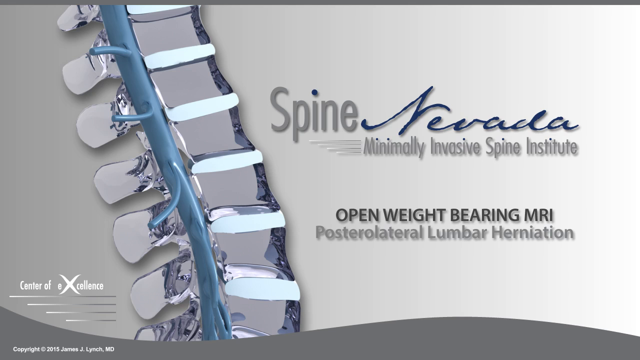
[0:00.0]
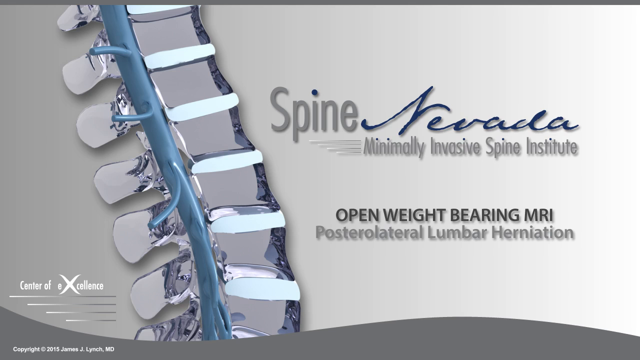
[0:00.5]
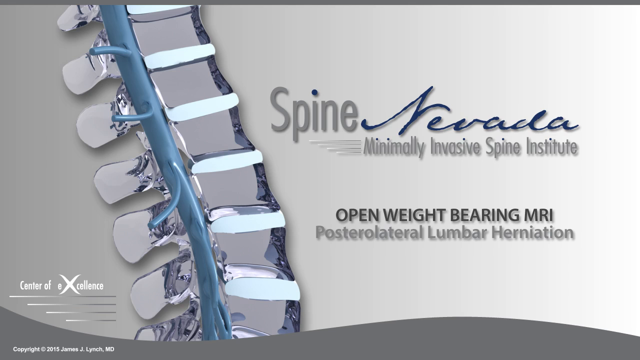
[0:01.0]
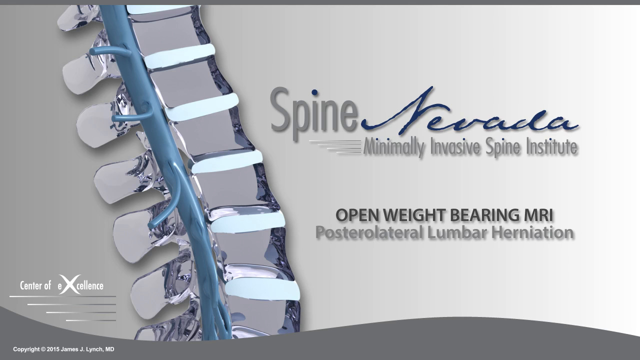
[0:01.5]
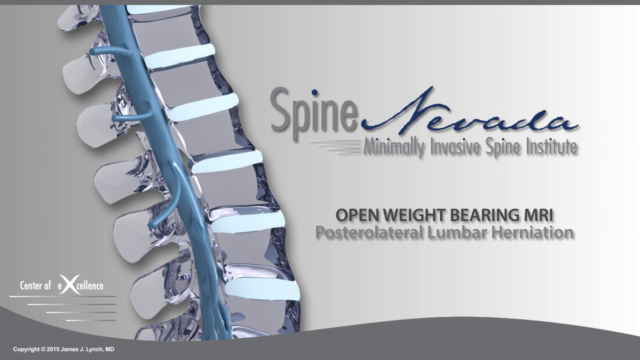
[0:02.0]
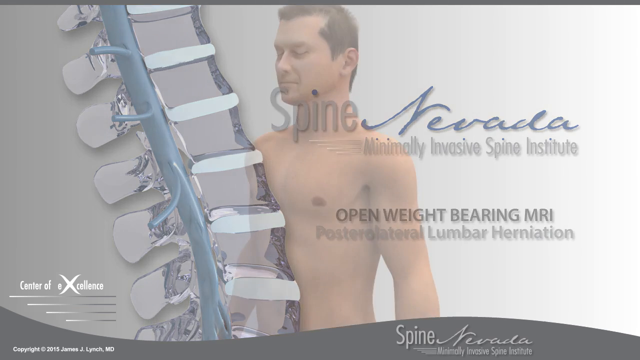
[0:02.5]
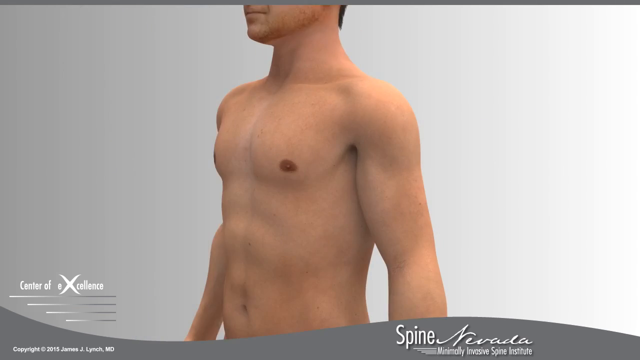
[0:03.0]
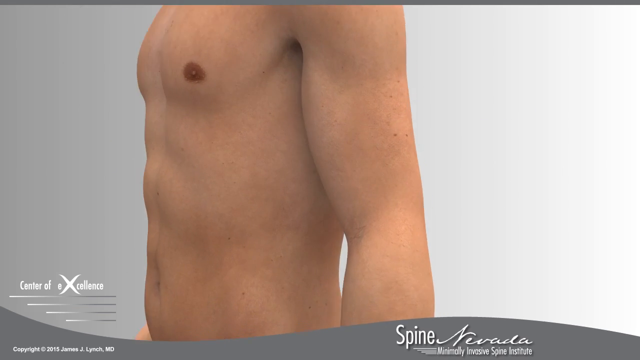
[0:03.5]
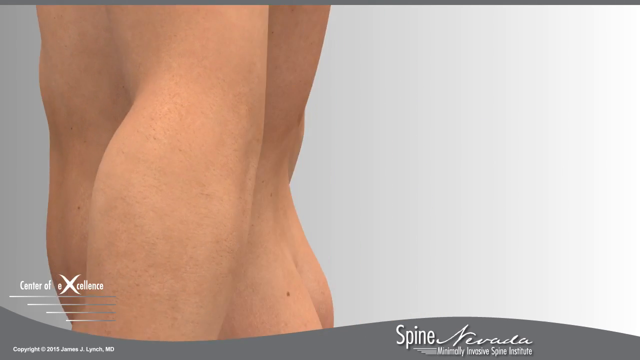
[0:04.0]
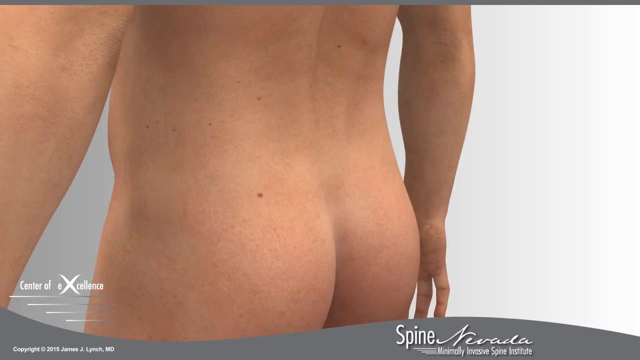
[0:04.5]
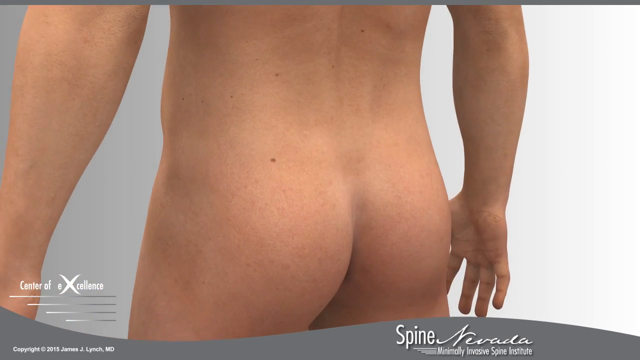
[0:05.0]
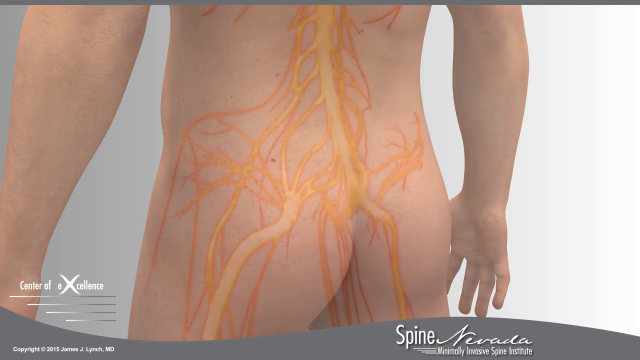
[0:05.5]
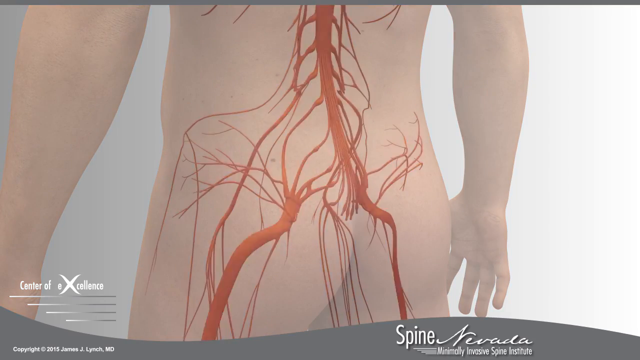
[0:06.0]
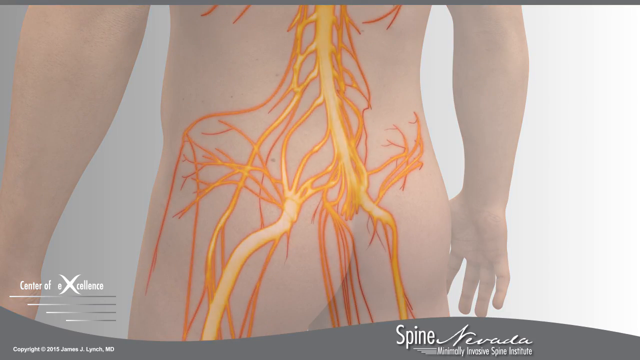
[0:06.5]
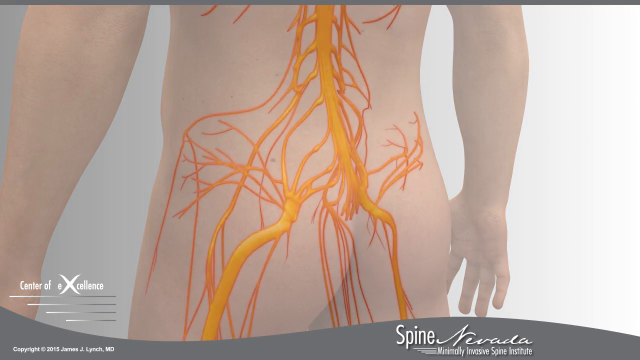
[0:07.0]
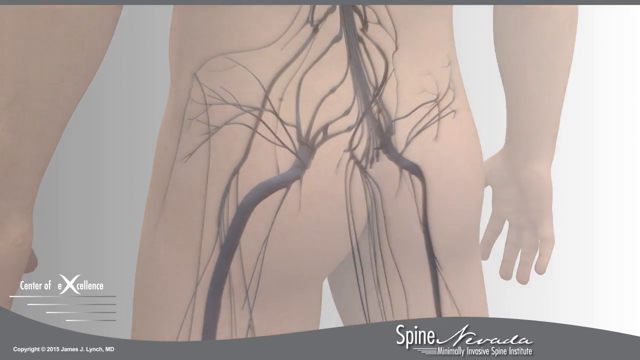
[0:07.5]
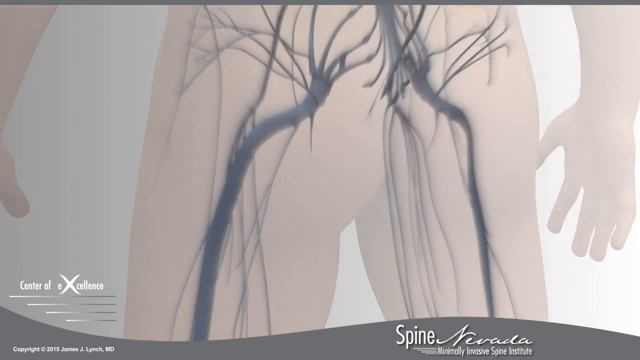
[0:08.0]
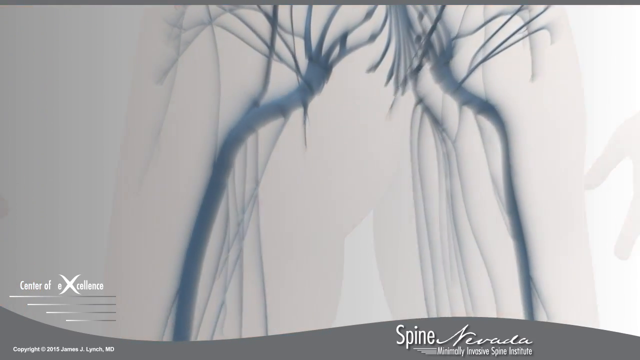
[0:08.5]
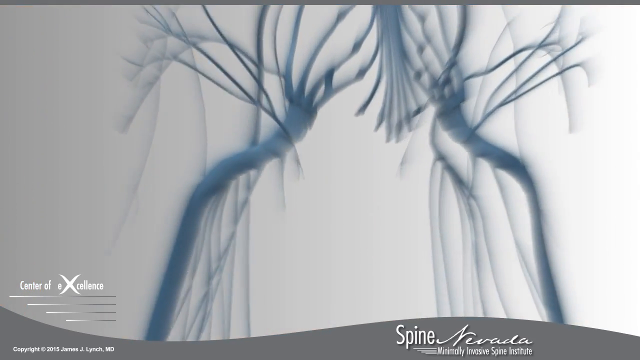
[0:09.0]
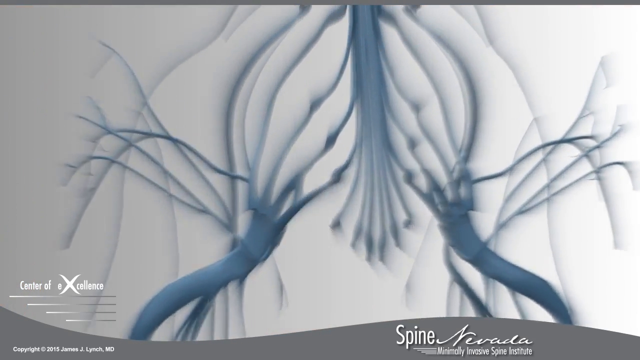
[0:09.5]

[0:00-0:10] The opening screen shows a spine diagram on the left side, and to the right text reads "Spine Nevada", "Minimally Invasive Spine Institute", "Open Weight-Bearing MRI", "Posterolateral Lumbar Herniation". This fades away and an image of a man appears; he wears no shirt and no pants. At first his front is visible, then he comes closer to the screen, rotating as he does so that his backside is visible. His nerves and spinal cord then become visible, and the camera angle moves downward and then upward, higher up his spine.